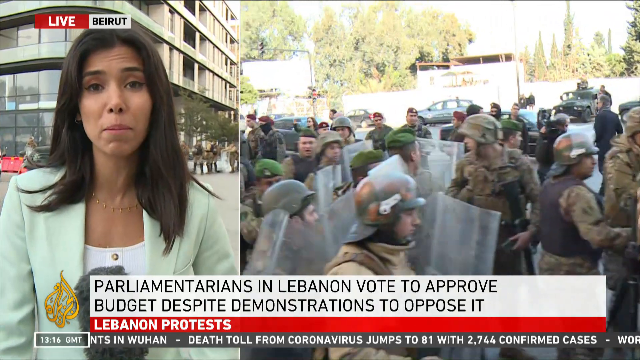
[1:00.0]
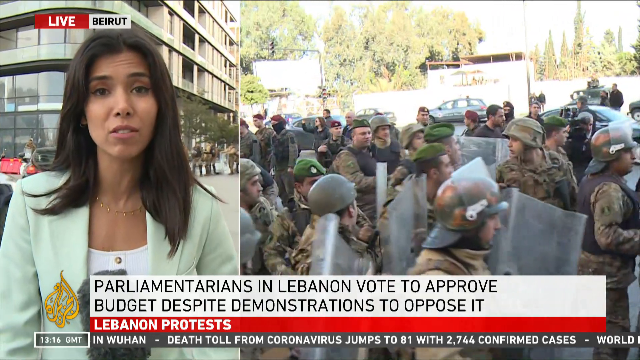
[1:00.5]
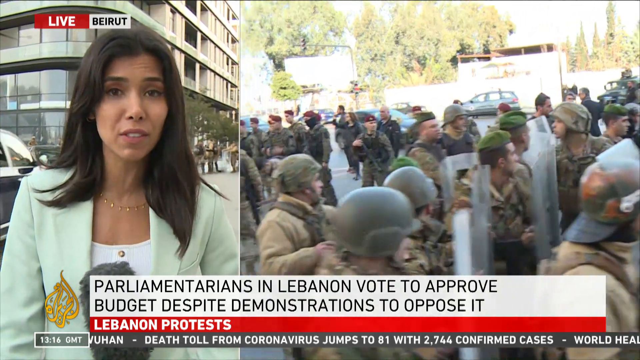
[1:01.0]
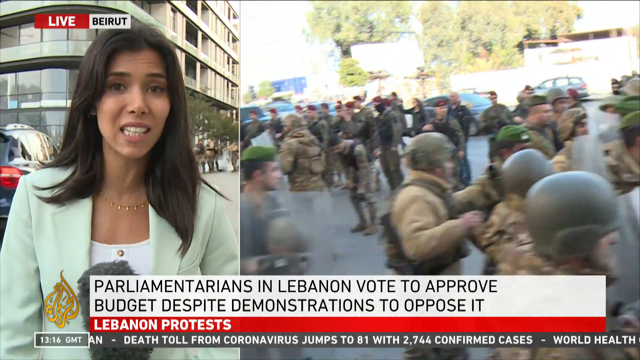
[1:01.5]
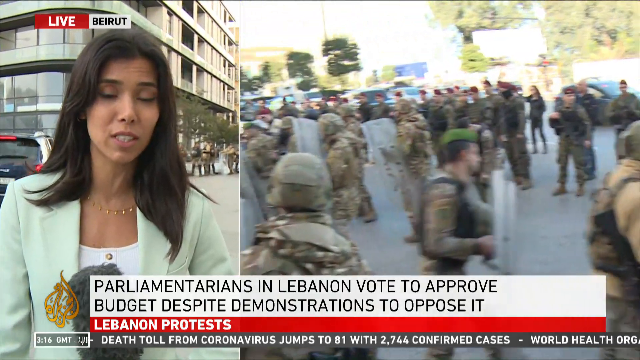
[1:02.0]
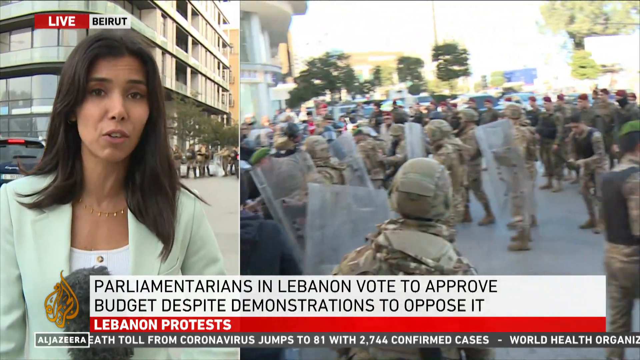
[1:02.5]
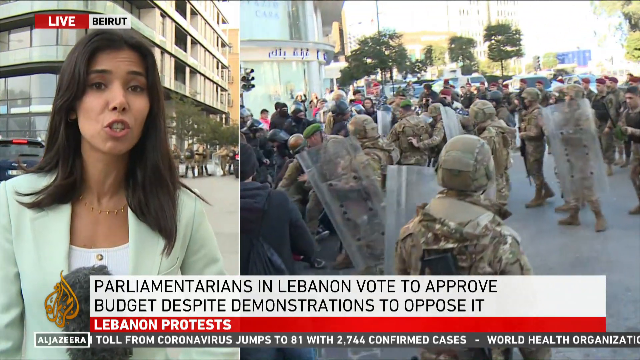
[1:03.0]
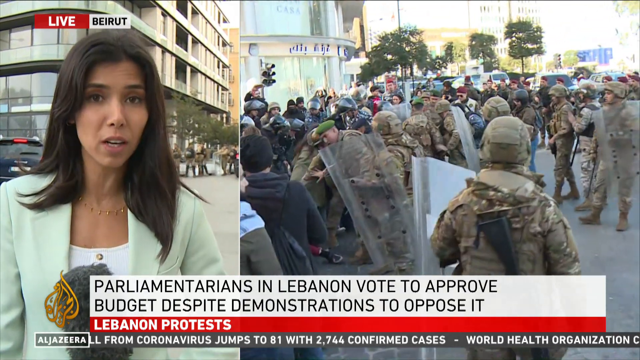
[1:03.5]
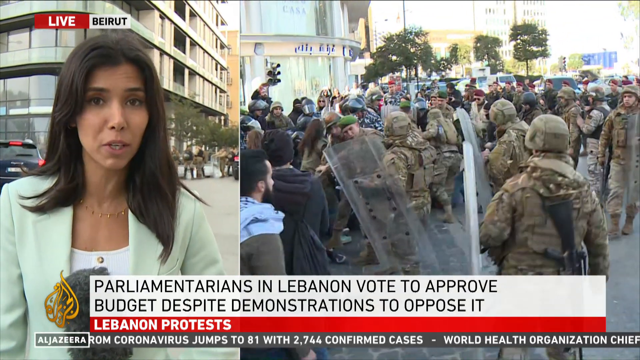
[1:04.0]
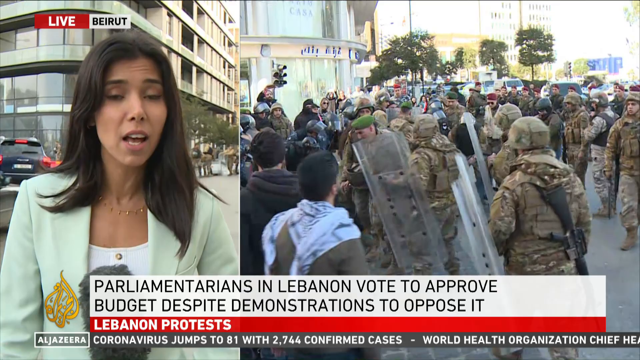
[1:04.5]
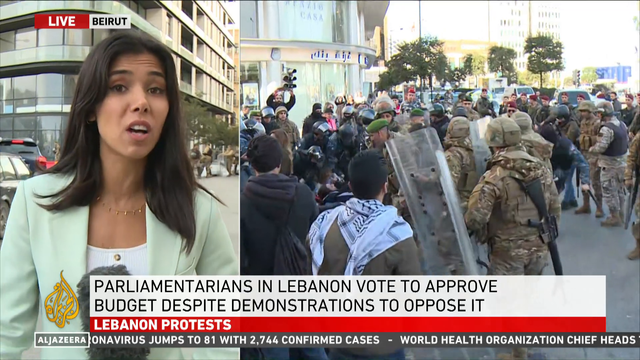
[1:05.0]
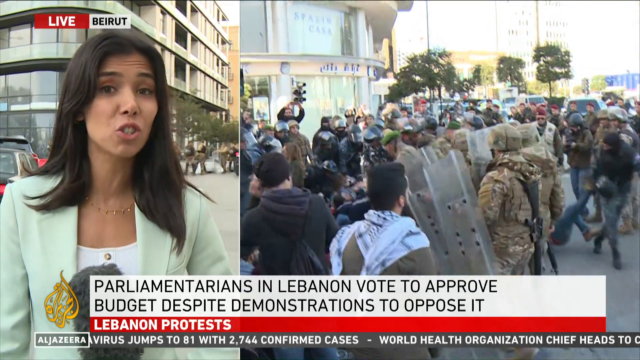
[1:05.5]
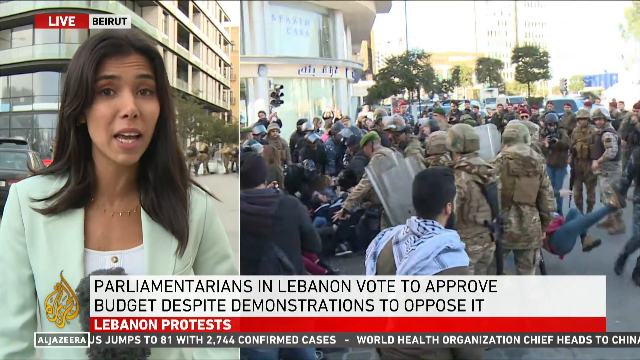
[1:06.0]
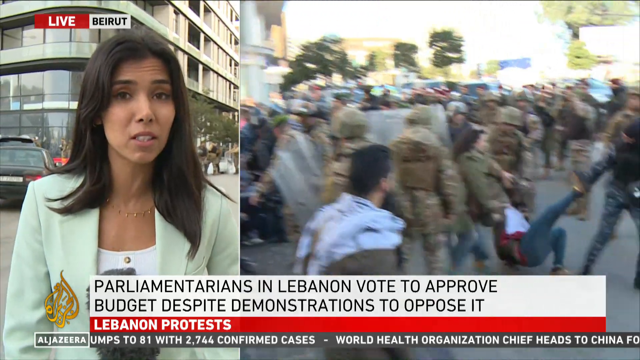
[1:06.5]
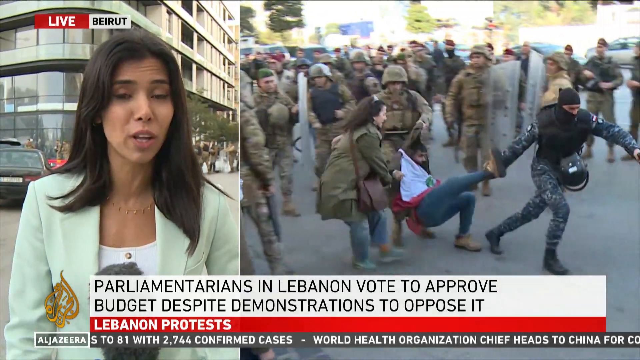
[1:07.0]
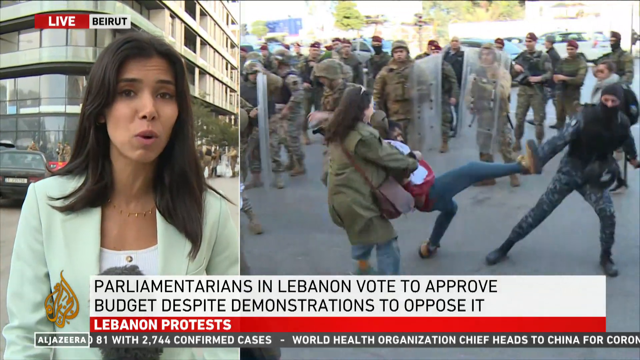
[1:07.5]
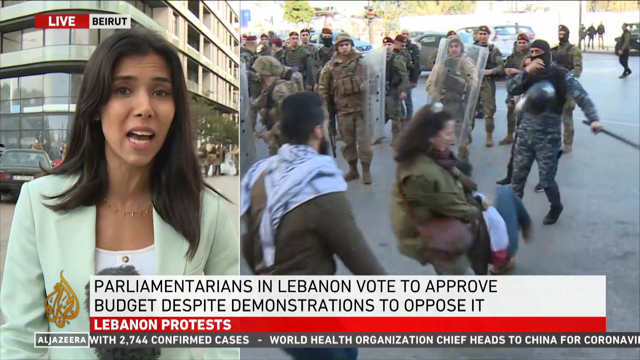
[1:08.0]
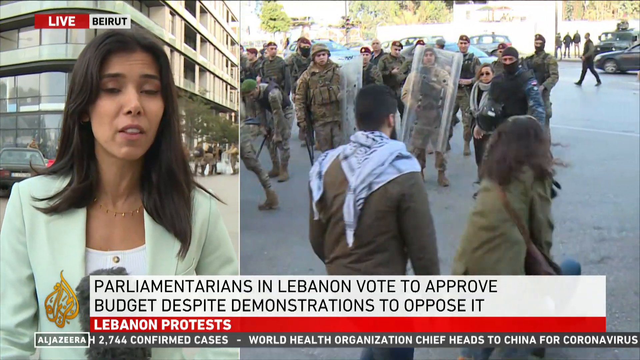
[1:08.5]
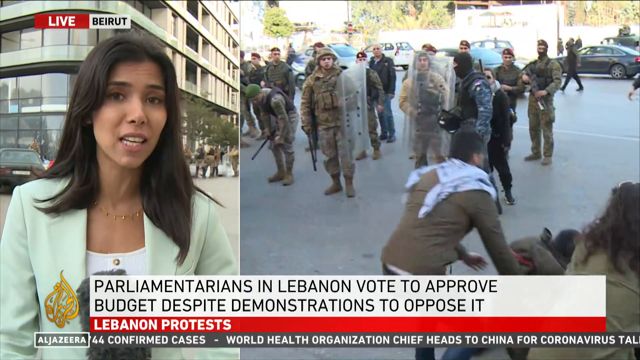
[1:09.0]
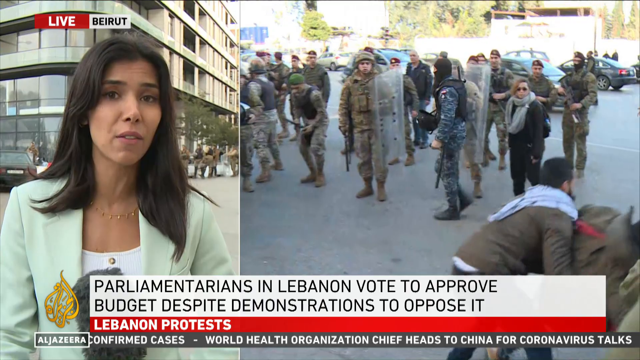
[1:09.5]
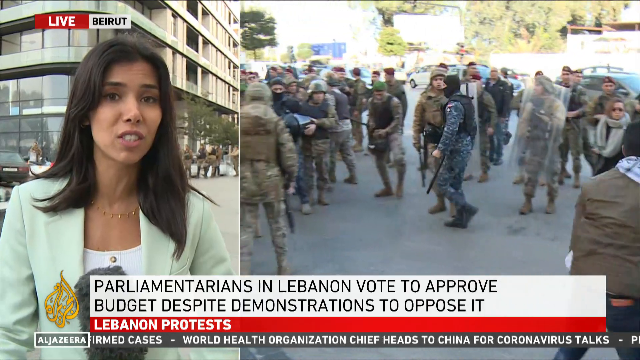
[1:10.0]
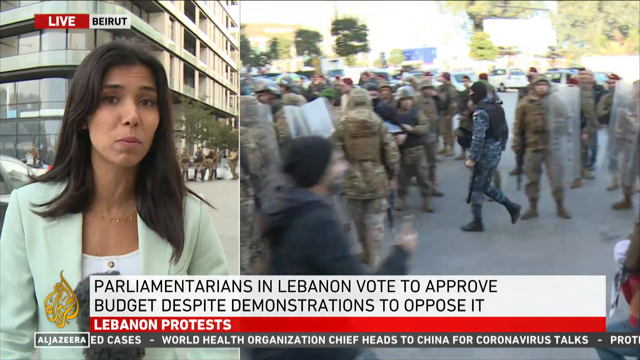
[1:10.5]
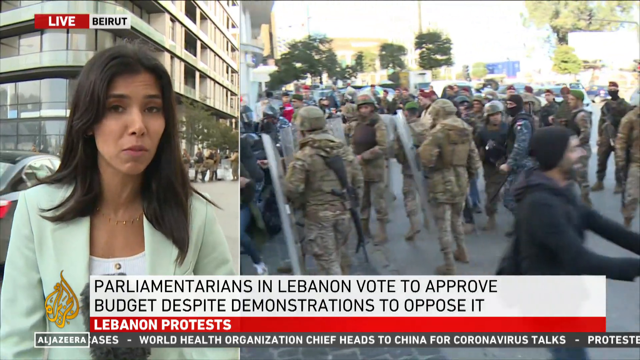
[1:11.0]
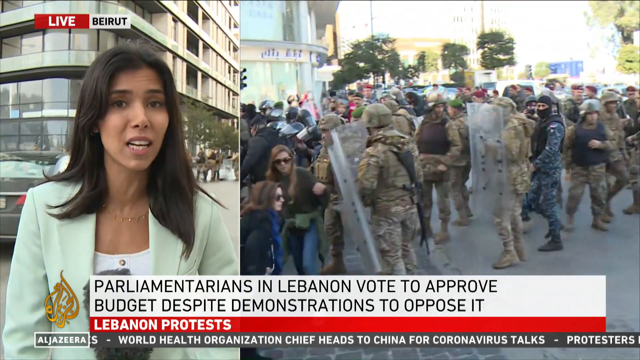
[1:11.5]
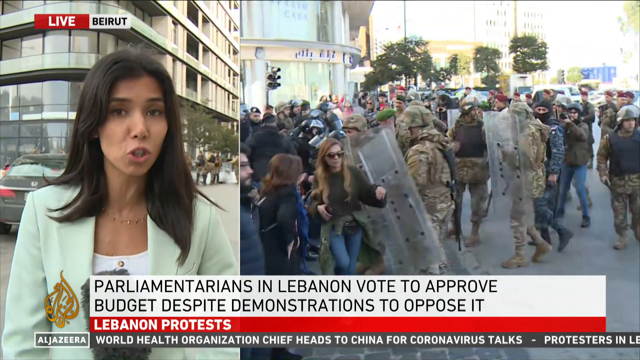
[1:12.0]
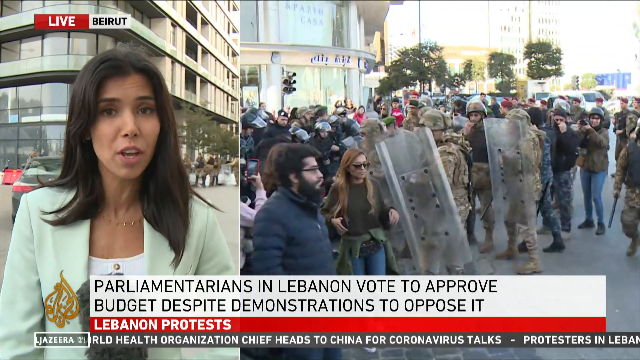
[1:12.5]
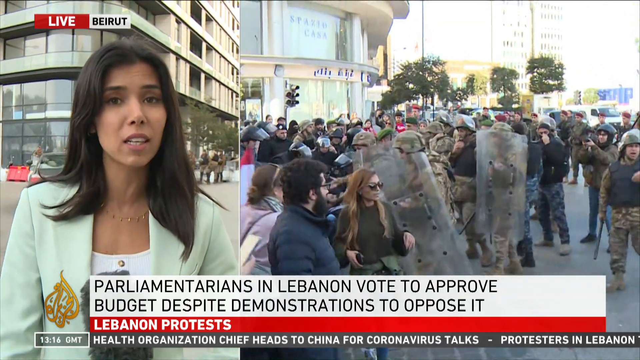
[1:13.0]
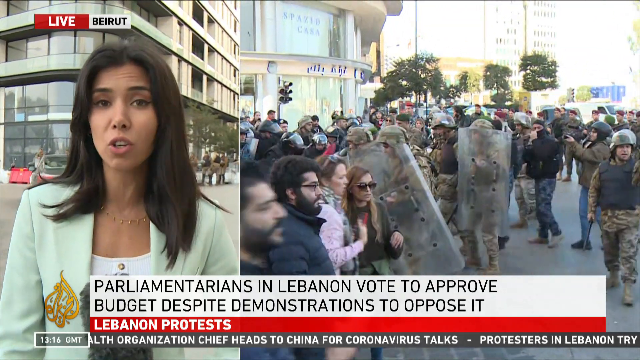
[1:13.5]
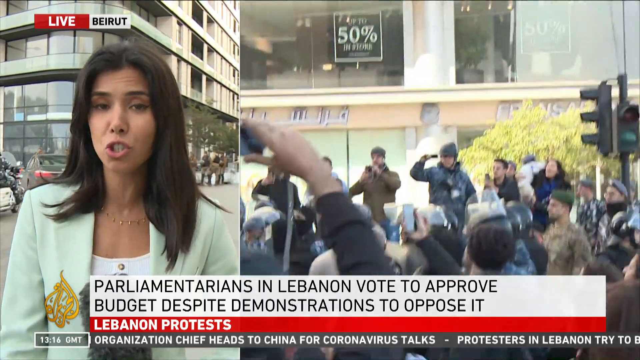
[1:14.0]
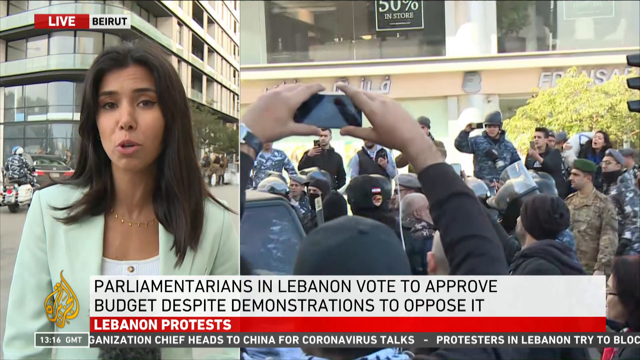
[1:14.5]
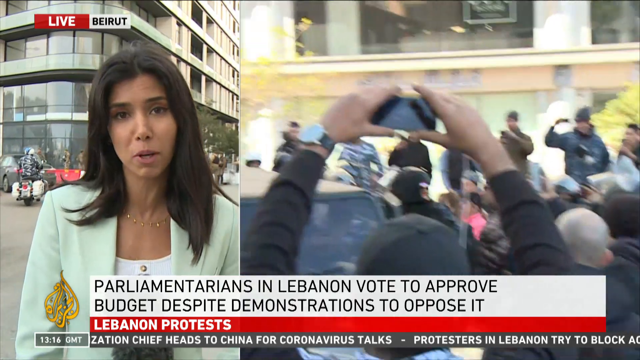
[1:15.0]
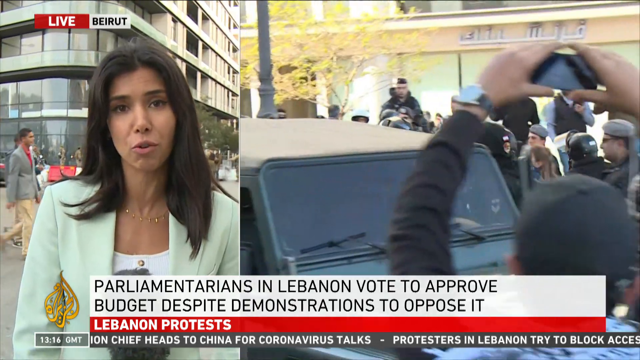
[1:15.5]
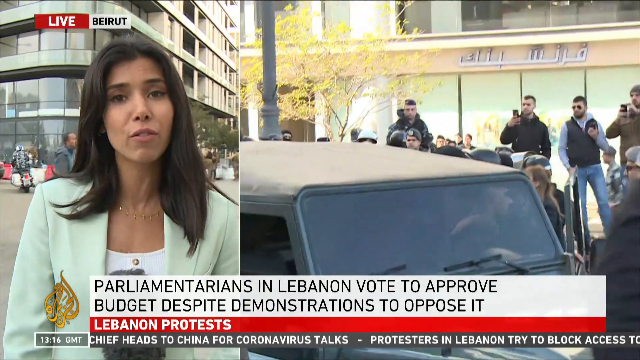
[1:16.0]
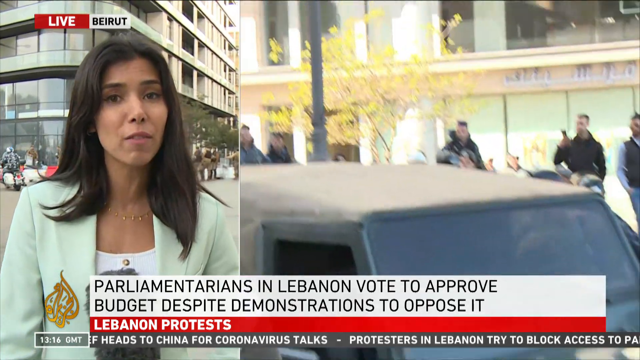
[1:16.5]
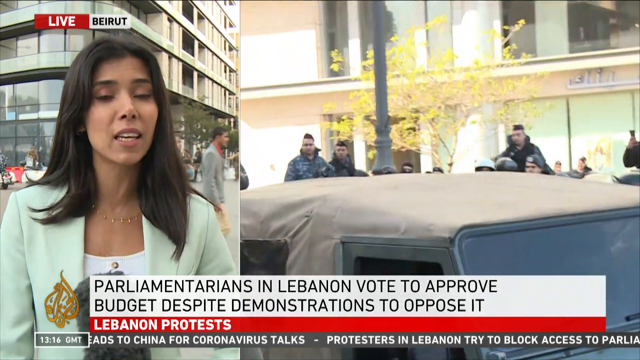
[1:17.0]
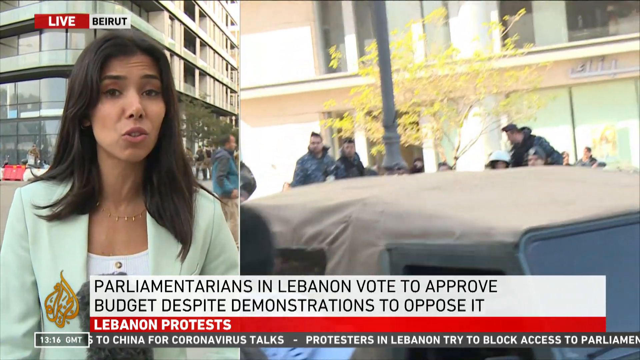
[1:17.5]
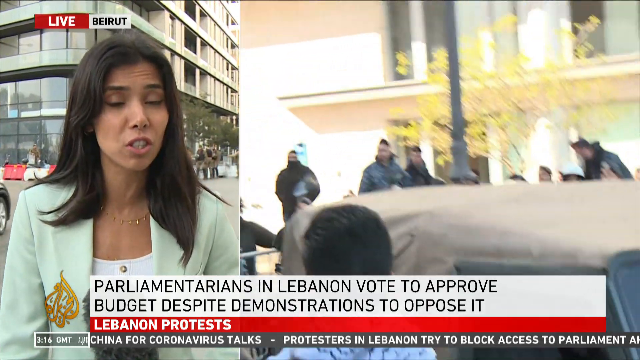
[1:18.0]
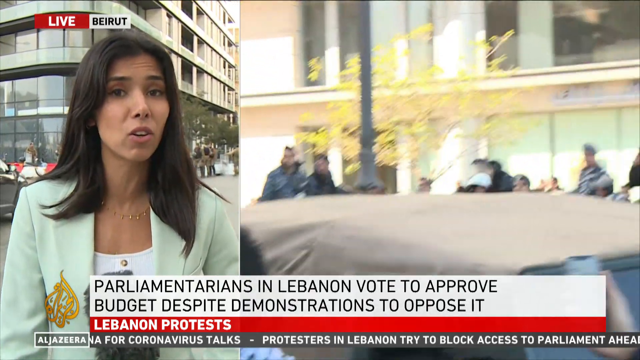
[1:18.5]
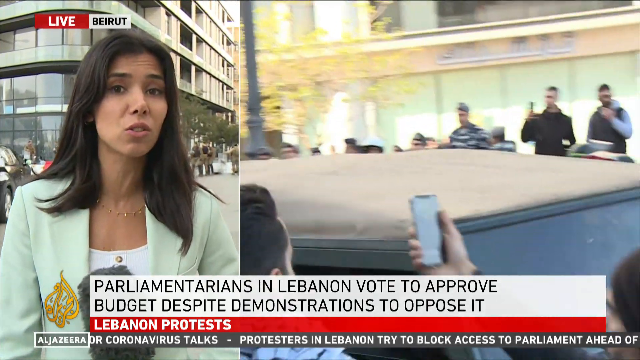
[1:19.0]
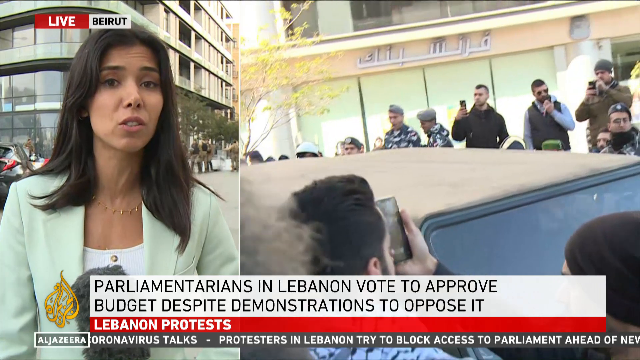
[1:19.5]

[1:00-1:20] The coverage stays with the reporter as a split screen shows a chaotic scene: a police officer in fatigues, wearing a mask that distorts his face, drags a protester by the pants leg, yanking him and throwing him away, while another protester holds the dragged protester up. Other officers just stand watching. The officer who did the pulling appears angry; as he walks back, he looks back. More footage shows protesters continuing to protest, with maybe 20 soldiers, a few police officers and maybe 50 protesters. It is a very sunny day.